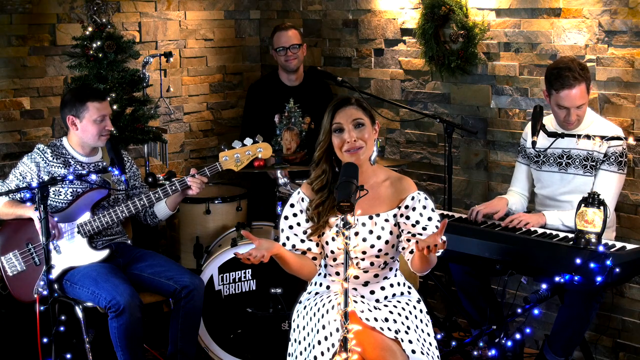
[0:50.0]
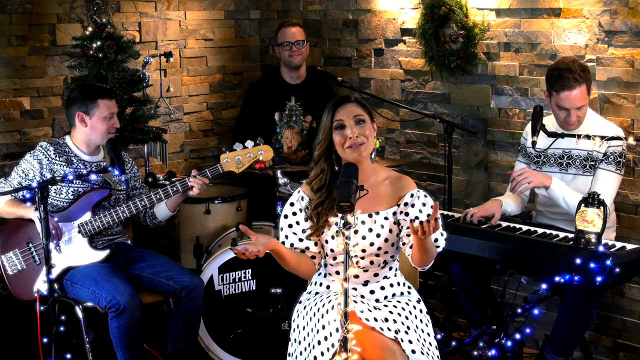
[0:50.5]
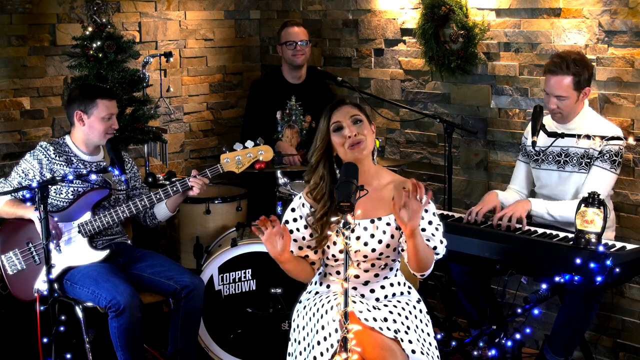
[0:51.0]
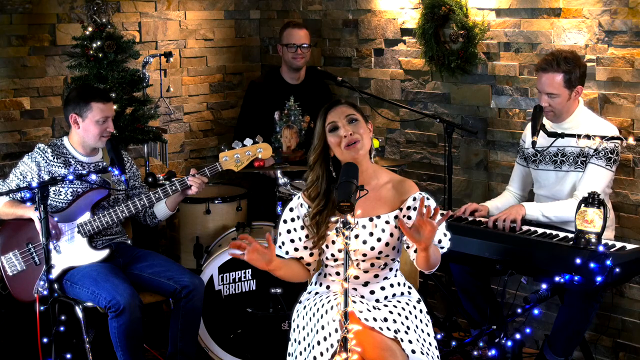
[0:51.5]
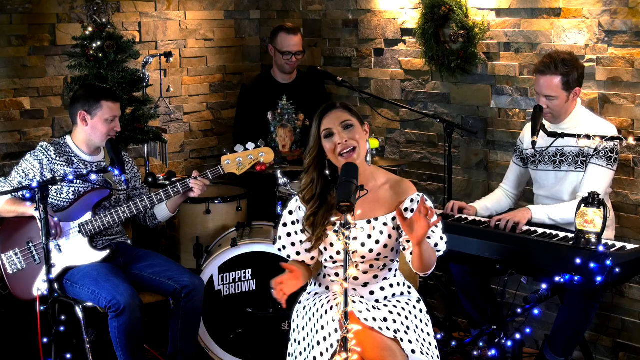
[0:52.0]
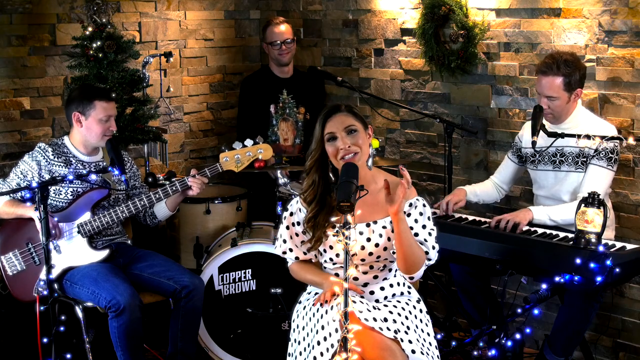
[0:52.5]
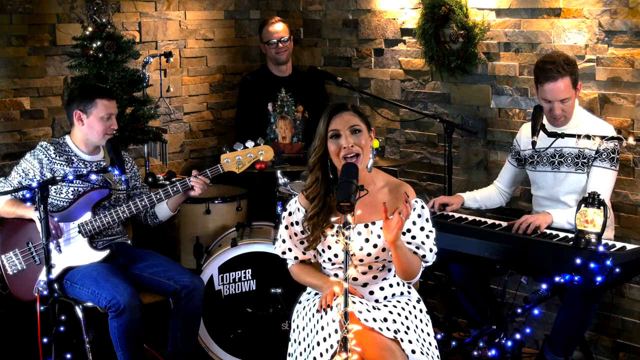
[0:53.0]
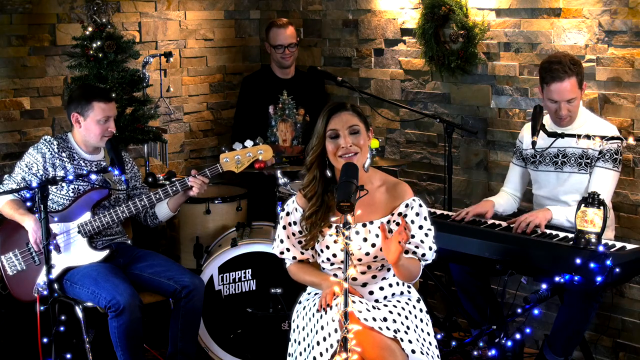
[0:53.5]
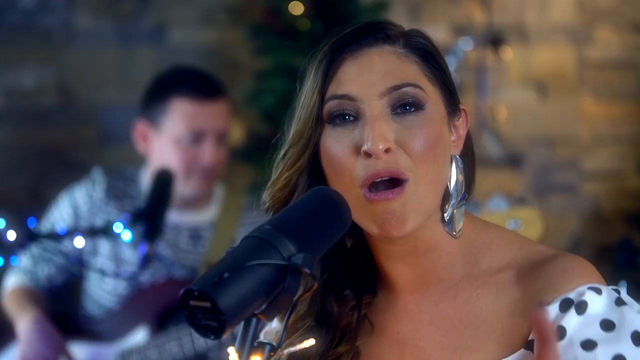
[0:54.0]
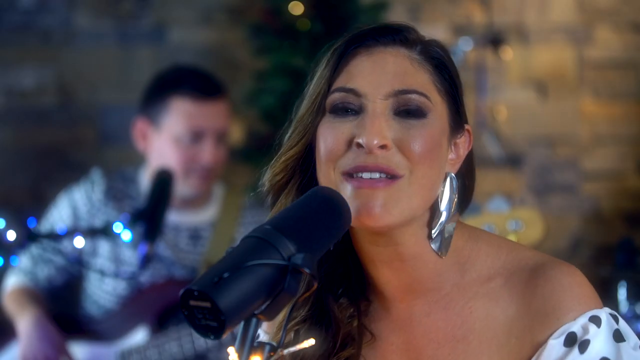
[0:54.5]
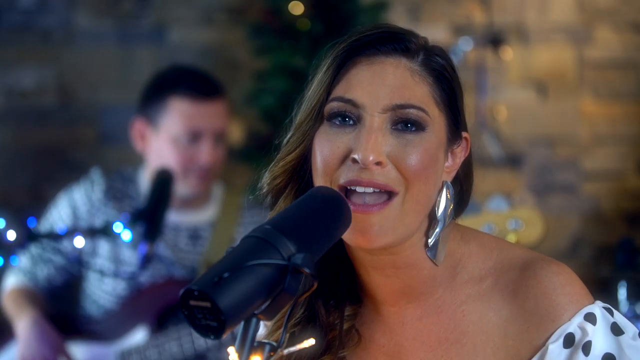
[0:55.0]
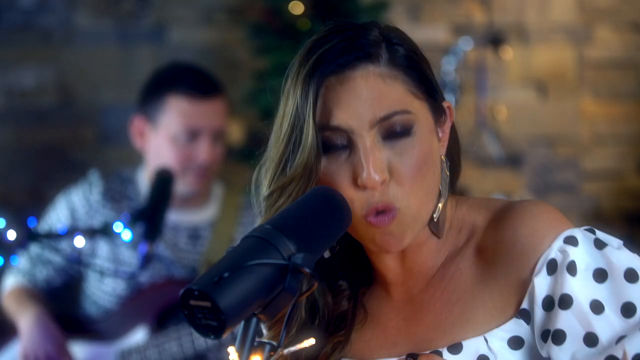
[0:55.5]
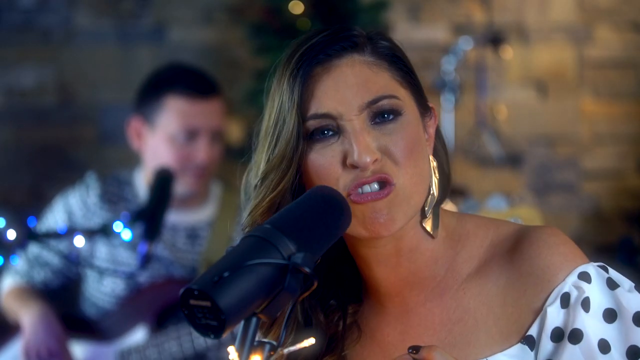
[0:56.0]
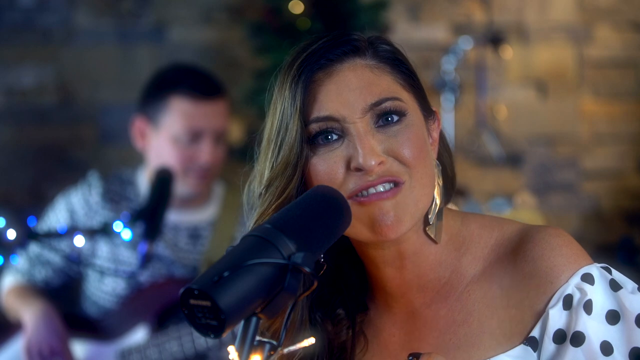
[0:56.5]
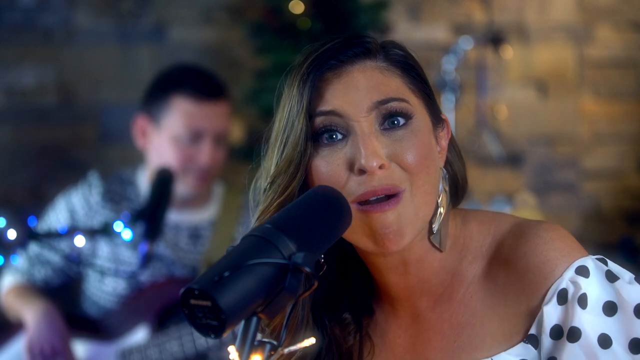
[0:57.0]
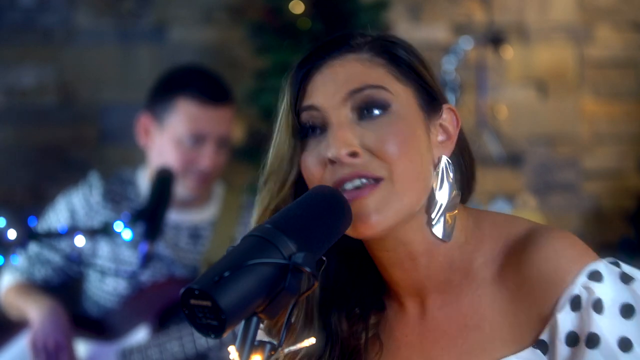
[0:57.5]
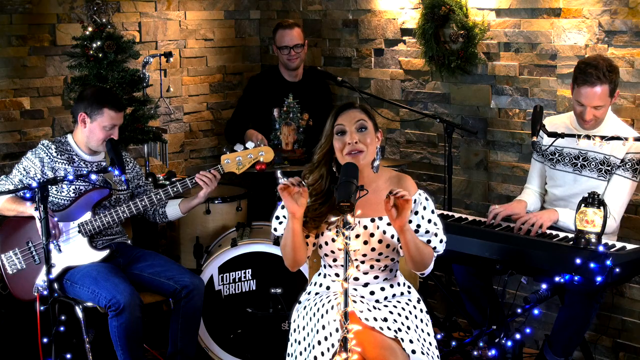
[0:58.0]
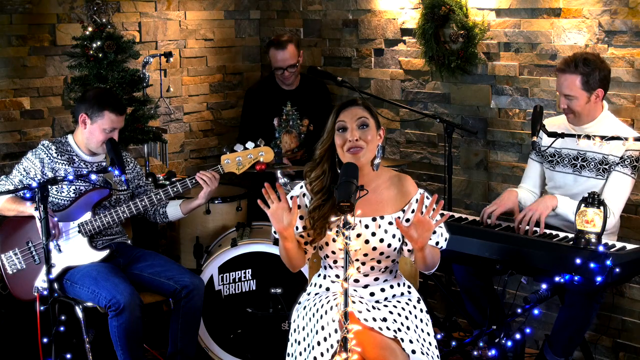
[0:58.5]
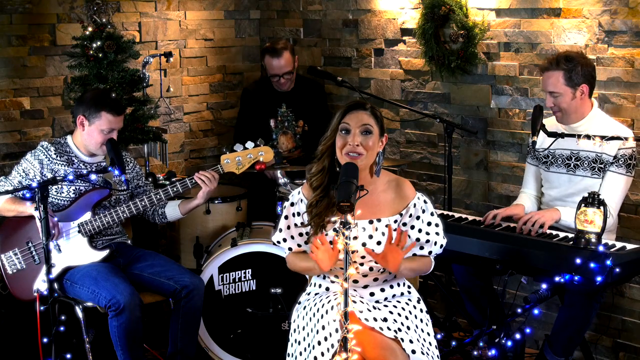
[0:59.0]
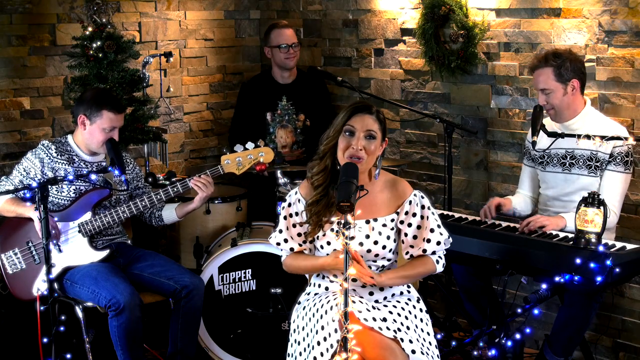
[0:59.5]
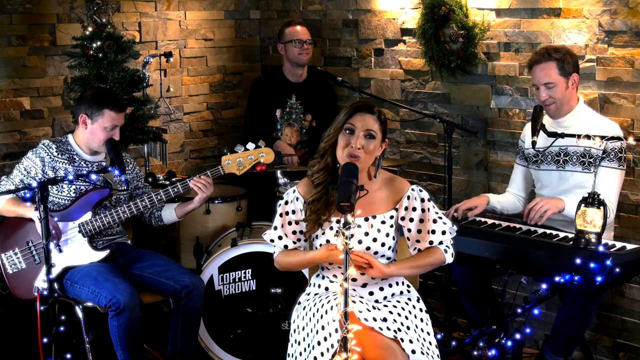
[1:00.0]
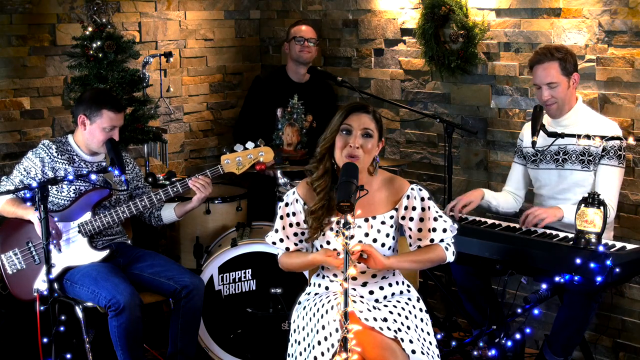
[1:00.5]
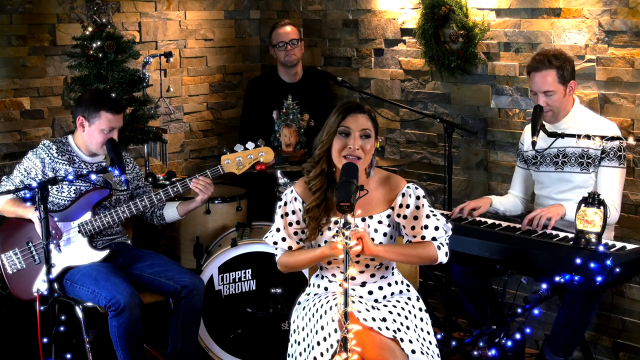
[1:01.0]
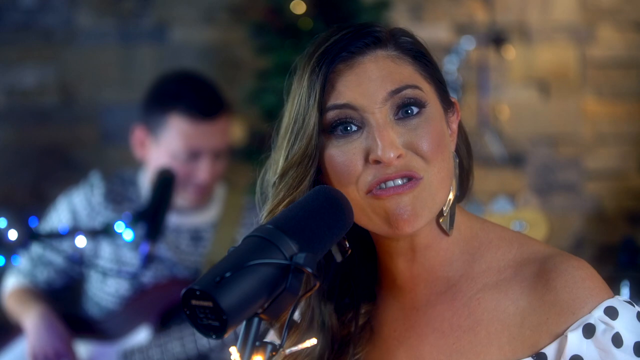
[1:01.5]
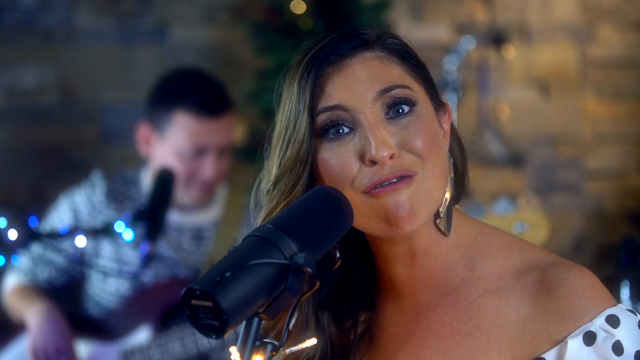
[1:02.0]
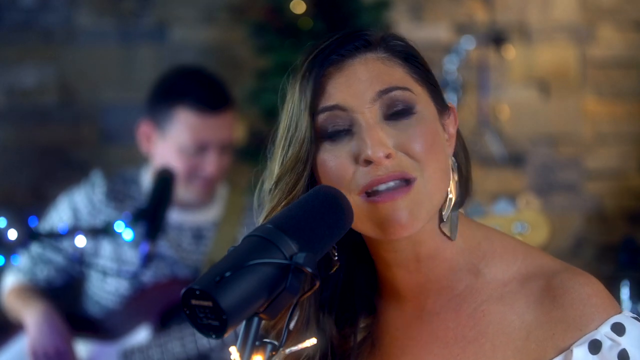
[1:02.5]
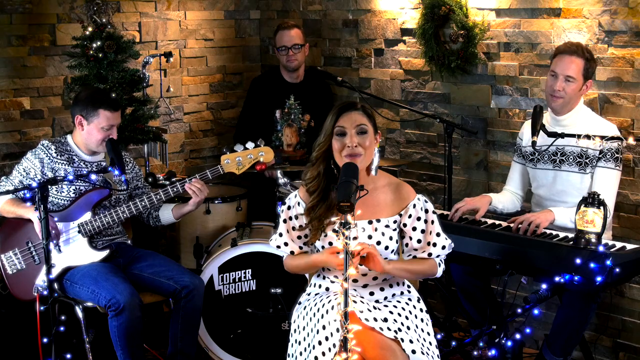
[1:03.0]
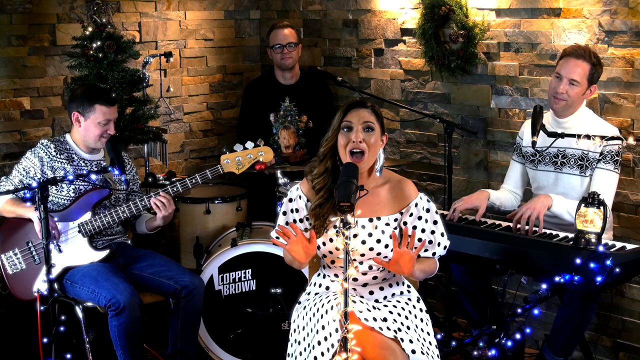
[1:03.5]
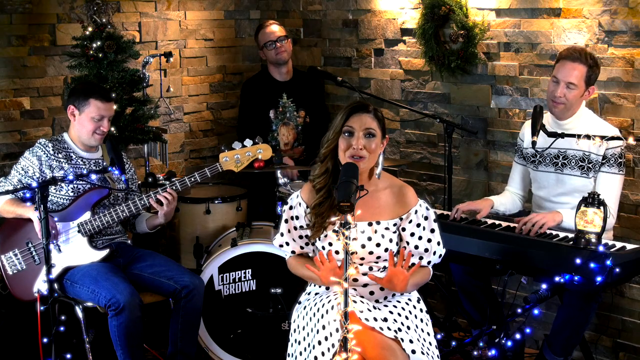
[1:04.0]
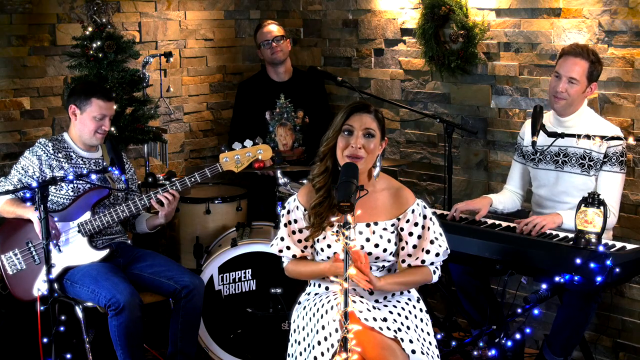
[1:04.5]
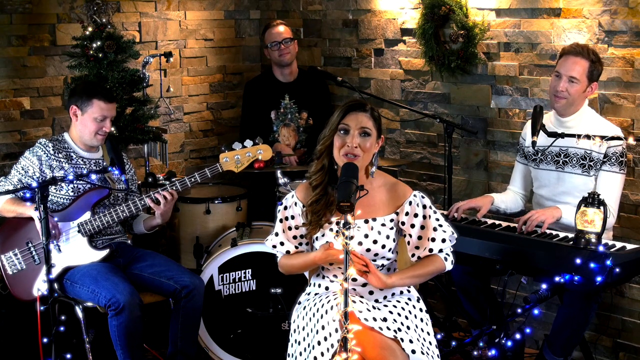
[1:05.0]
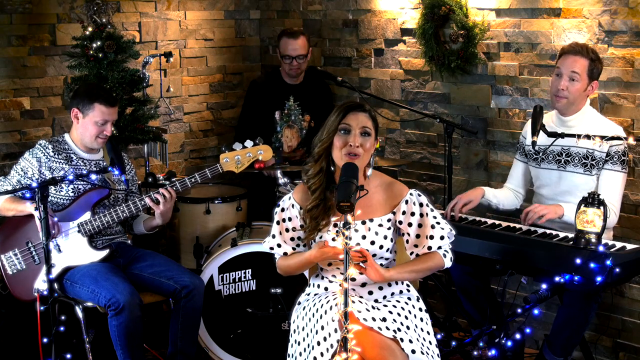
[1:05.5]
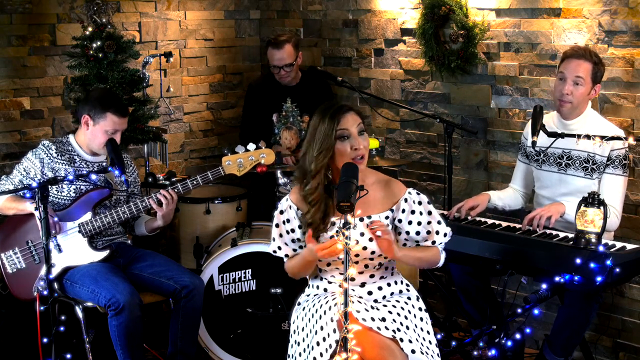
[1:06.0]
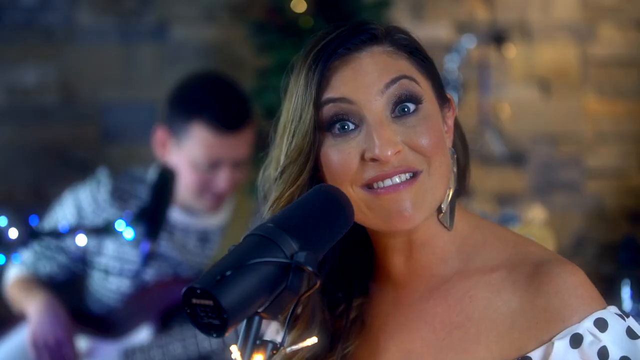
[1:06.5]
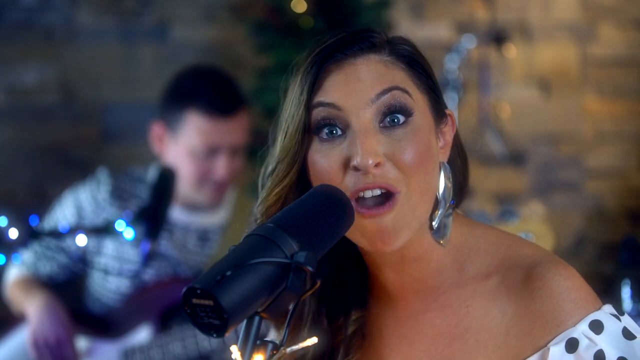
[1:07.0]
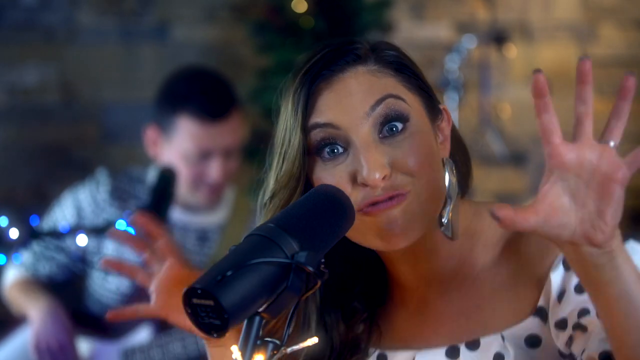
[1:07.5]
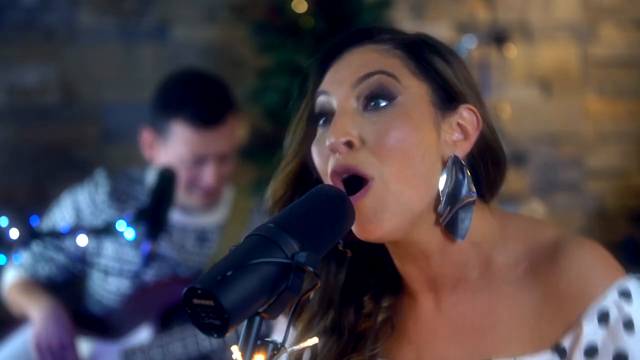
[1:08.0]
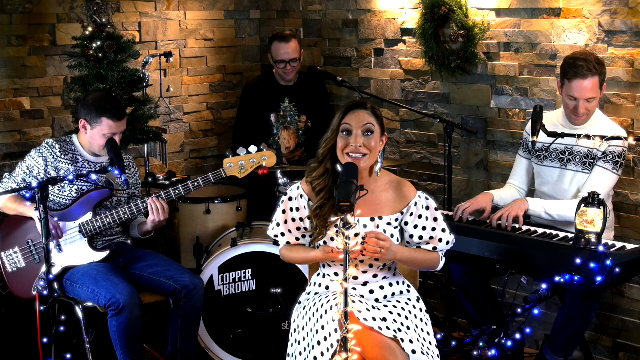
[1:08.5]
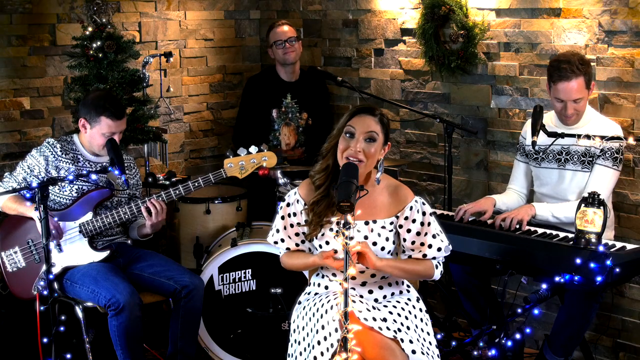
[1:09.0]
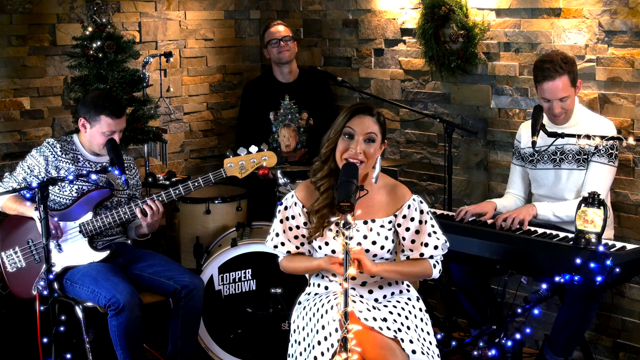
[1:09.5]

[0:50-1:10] Four musicians are up on a stage. The woman is seated in front of a microphone on a stand, and the other three are men: a guitar player, a drummer and a keyboardist. The woman makes a lot of facial expressions while she sings, seems very theatrical and moves her hands a lot. She turns her face toward the camera and the shot cuts to a close-up of her face. The video then returns to the band, where she is still moving her hands, kind of clasping them together, turning her face to the camera once more and then turning back to the front. She wears a lot of makeup and very large, flashy earrings, and seems to be kind of putting on an act. All three men are playing their instruments while she sings, kind of smiling and seeming chirpy.